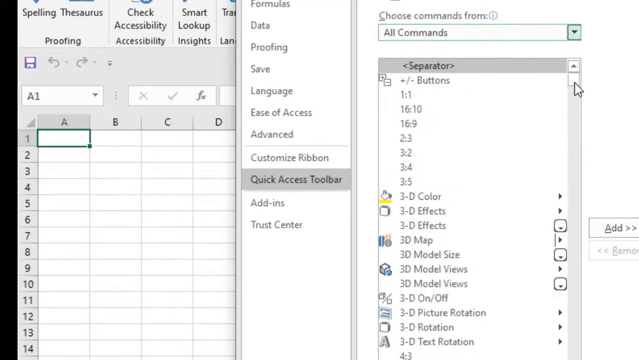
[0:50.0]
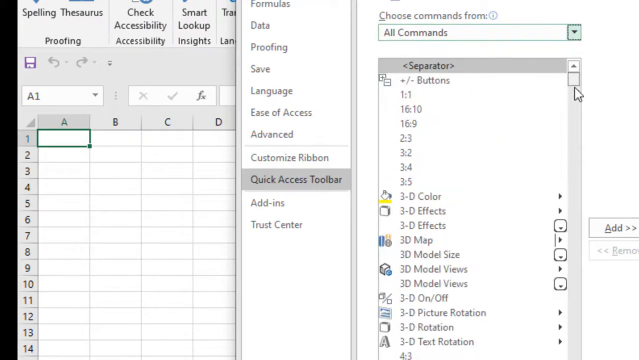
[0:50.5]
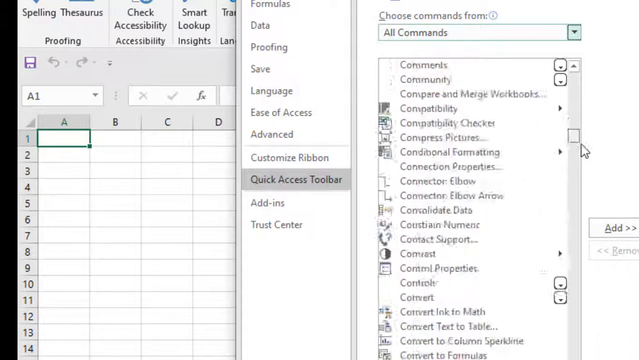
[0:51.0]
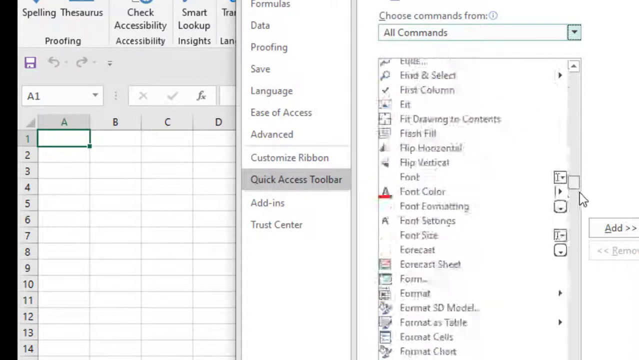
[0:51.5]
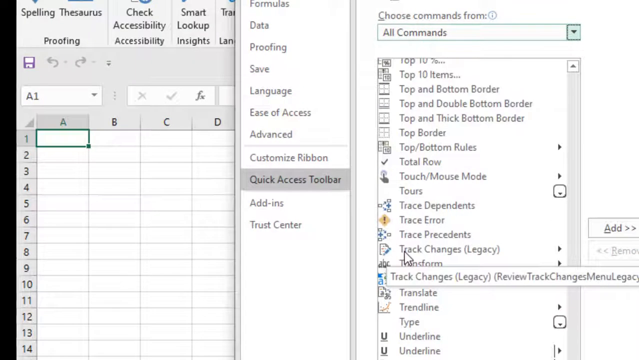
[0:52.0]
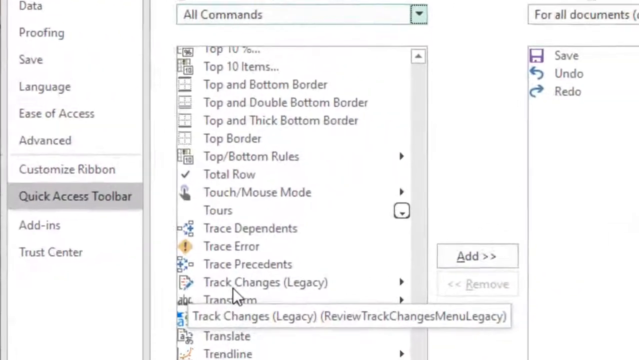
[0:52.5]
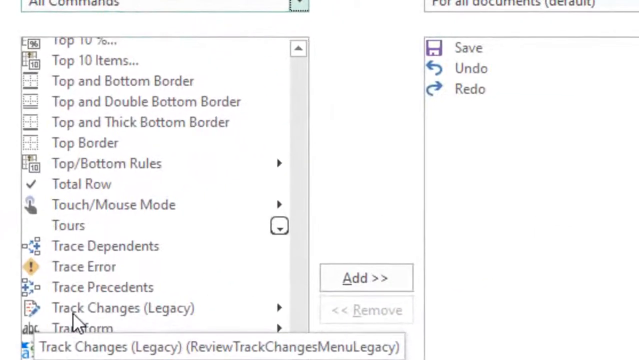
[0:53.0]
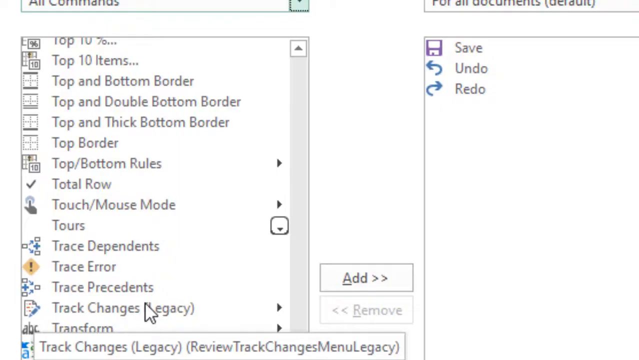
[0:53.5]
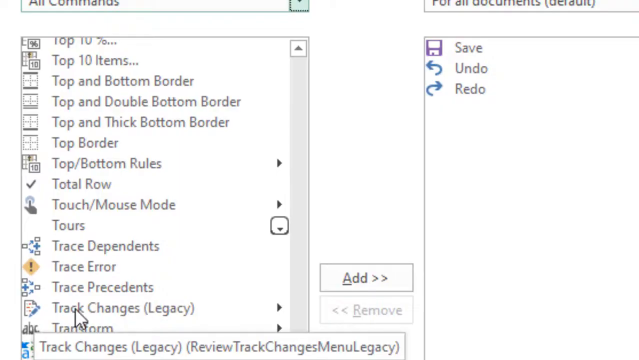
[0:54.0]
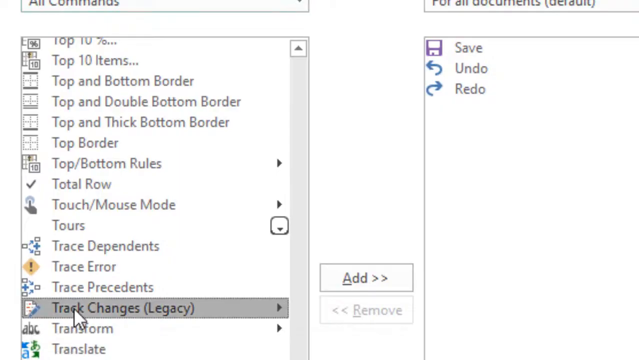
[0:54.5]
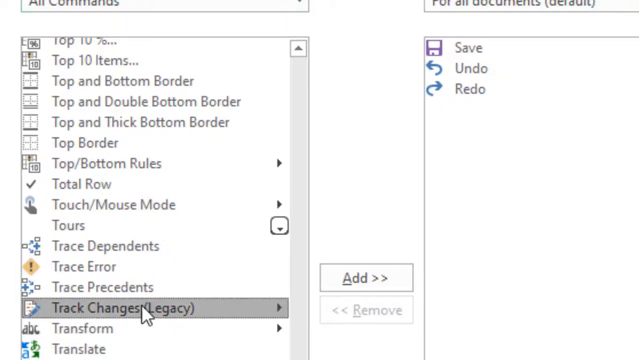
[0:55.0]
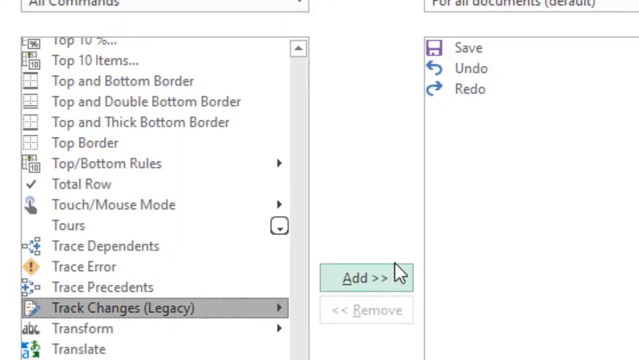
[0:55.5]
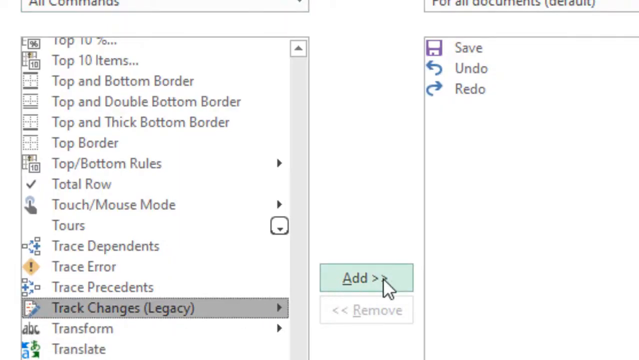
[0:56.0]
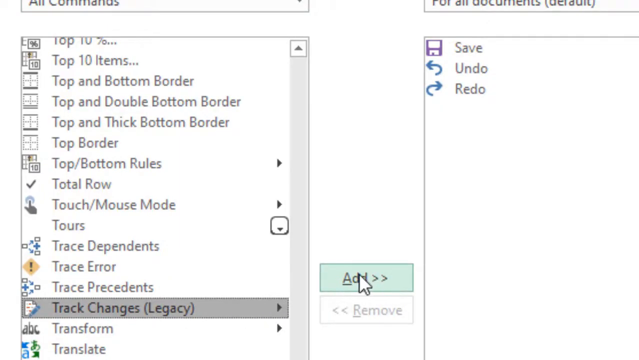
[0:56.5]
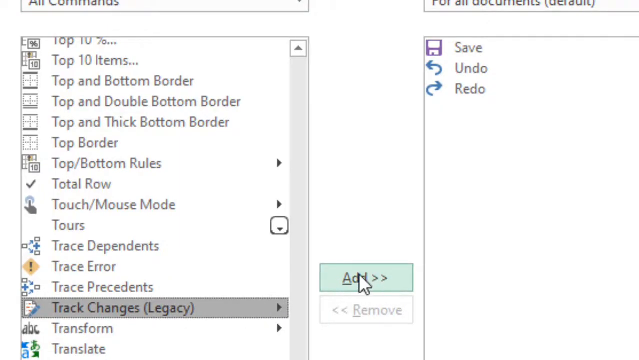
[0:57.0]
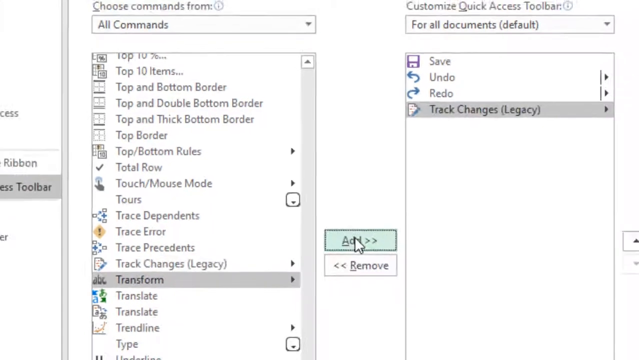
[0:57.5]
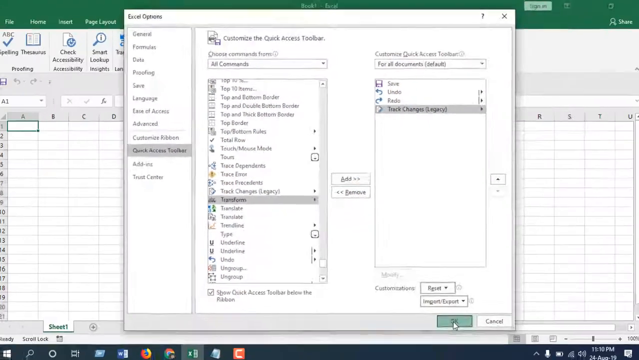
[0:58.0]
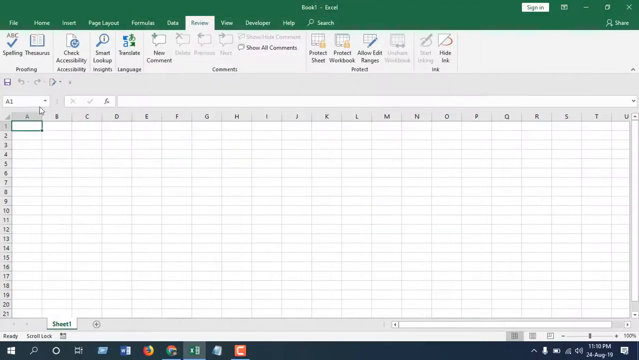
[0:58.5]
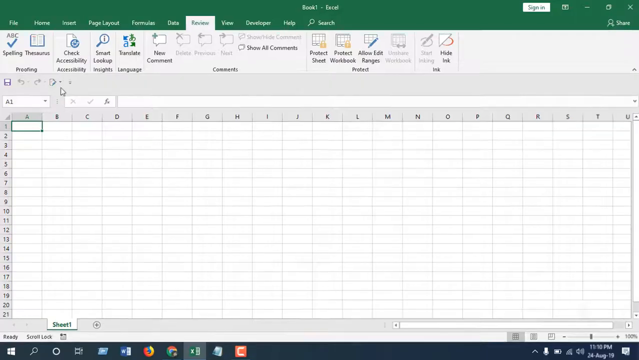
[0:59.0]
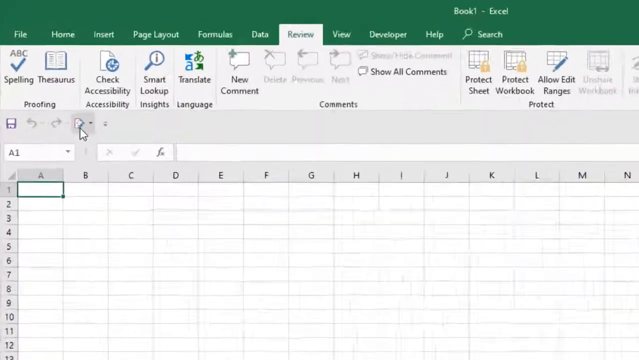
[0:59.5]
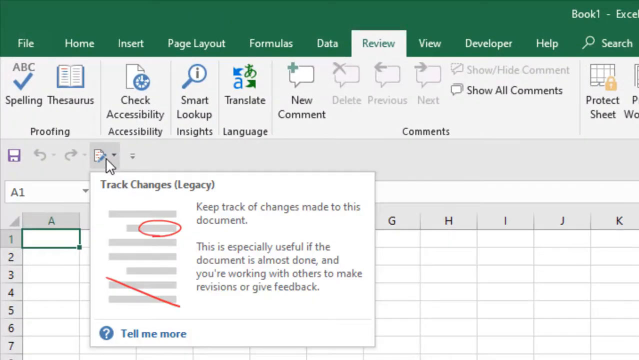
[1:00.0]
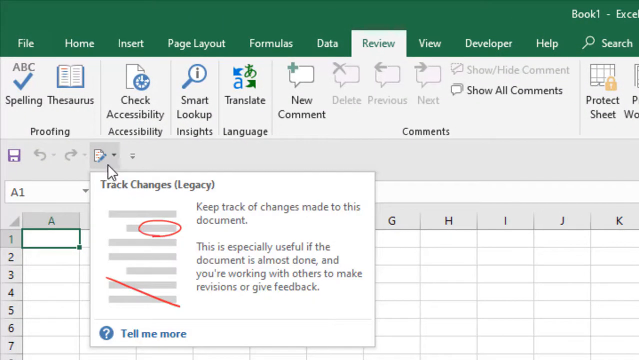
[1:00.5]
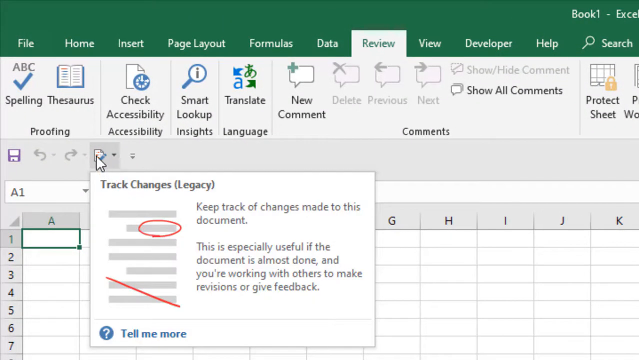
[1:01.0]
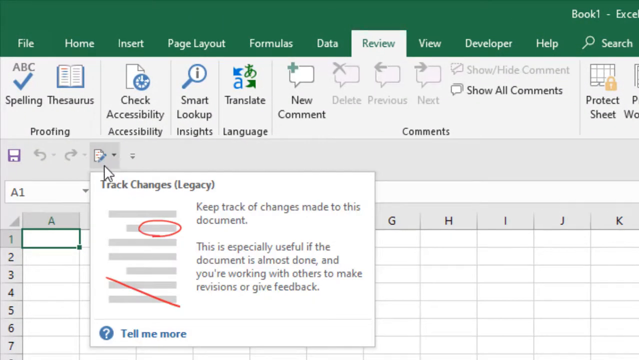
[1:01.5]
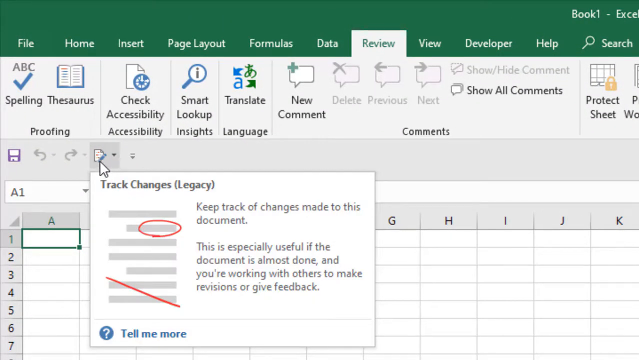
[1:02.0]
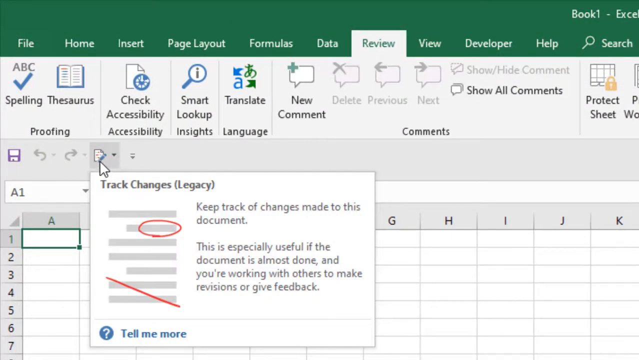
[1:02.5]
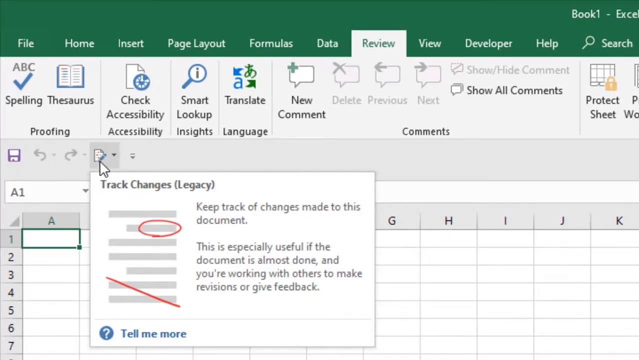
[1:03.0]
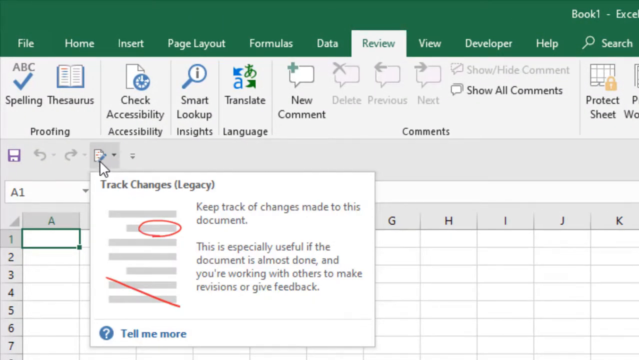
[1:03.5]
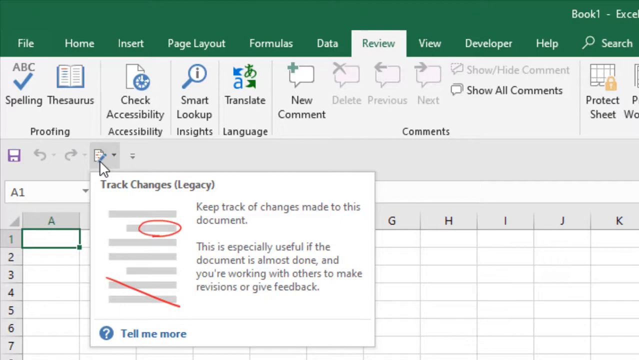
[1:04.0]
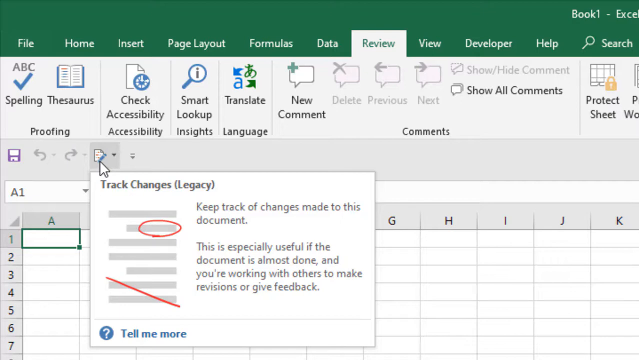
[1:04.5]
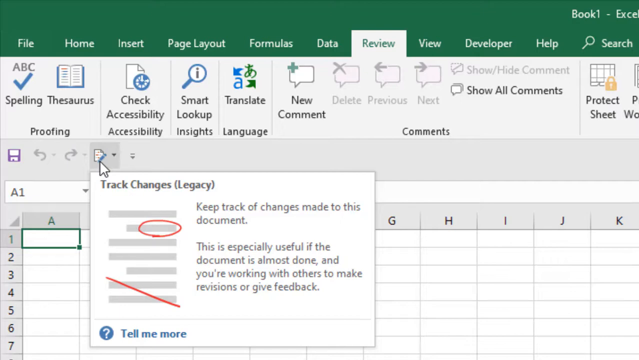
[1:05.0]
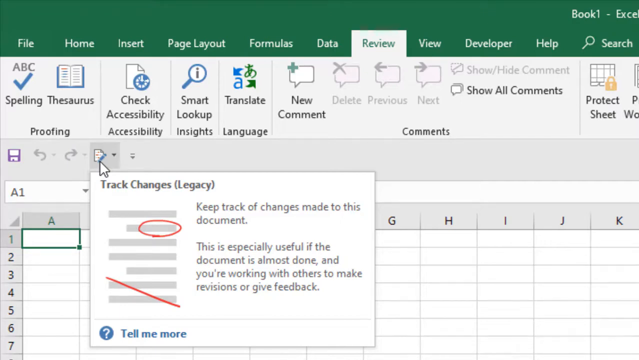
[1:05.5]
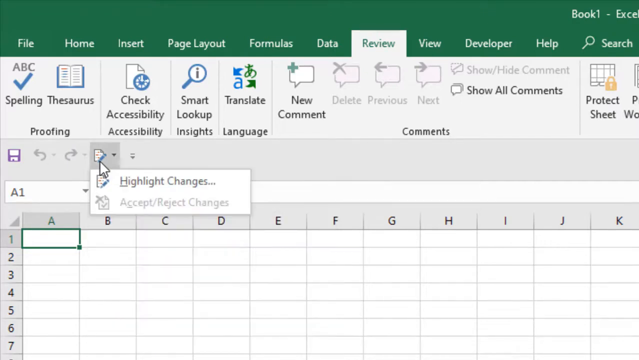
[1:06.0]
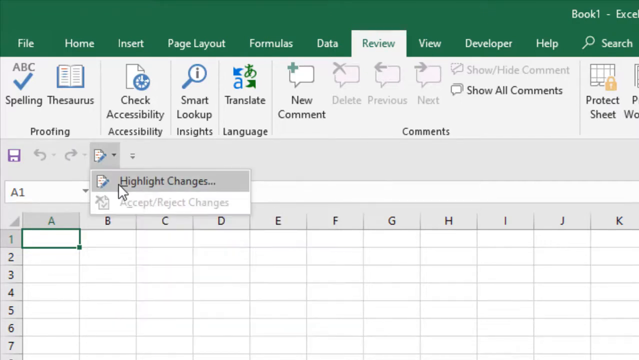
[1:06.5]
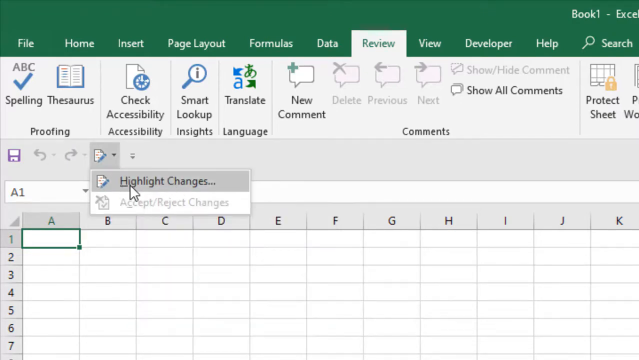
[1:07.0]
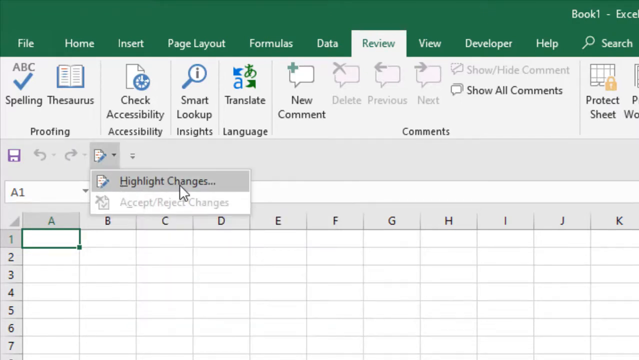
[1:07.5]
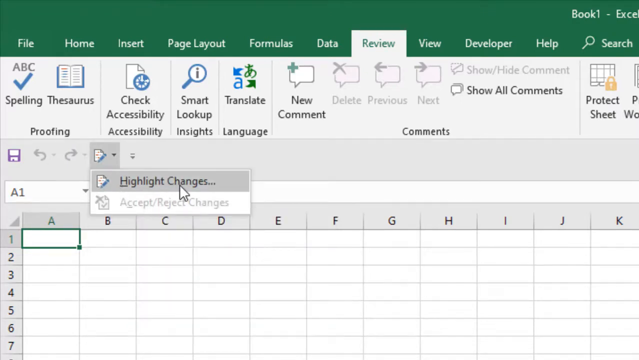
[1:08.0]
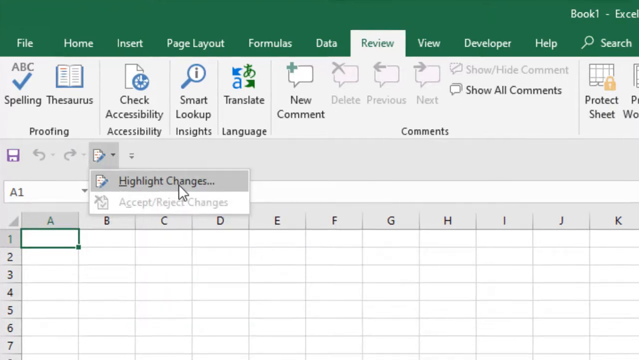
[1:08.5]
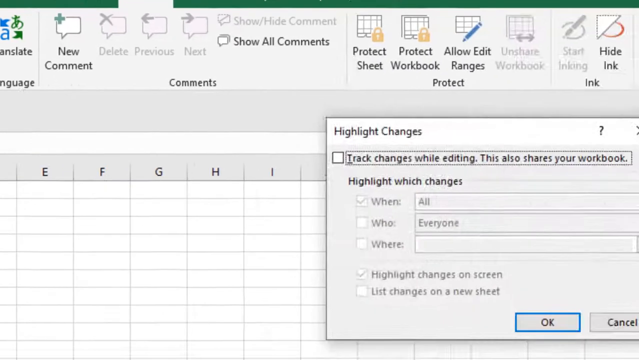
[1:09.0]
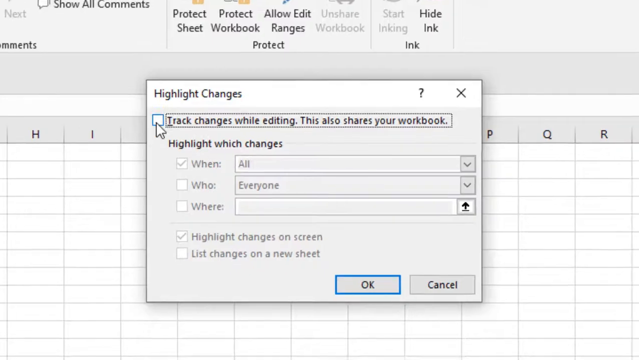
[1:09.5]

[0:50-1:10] In Microsoft Excel, the settings for the Quick Access Toolbar are open. A scrollable dropdown list shows entries such as a separator, several numbered entries, 3D Color, 3D Effects, 3D Map, 3D Model Size, 3D Model Views, 3D On/Off, 3D Picture Rotation, 3D Rotation and 3D Text Rotation. The user scrolls through it, and the camera moves toward the right, where items can be added or removed. The user clicks on Track Changes (Legacy), then hovers over and clicks the Add button, and the view returns to the main Excel page. The camera zooms in as the user hovers over an item called Track Changes (Legacy), whose description reads "Keep track of changes made to this document. This is especially useful if the document is almost done and you're working with others to make revisions or give feedback." Another box pops up with Highlight Changes and Accept/Reject Changes. The user clicks Highlight Changes, opening a box with a setting that can be enabled or disabled, reading "track changes while editing. This also shares your workbook", along with other boxes labeled When, Who and Where.